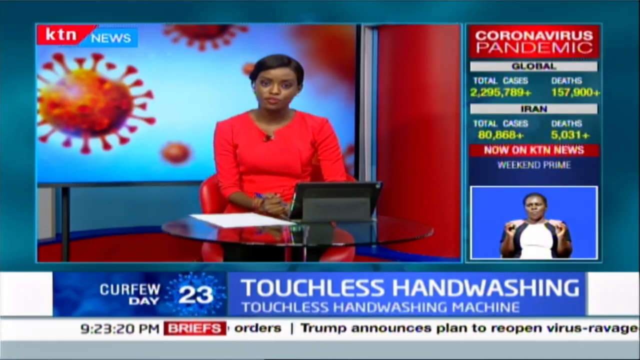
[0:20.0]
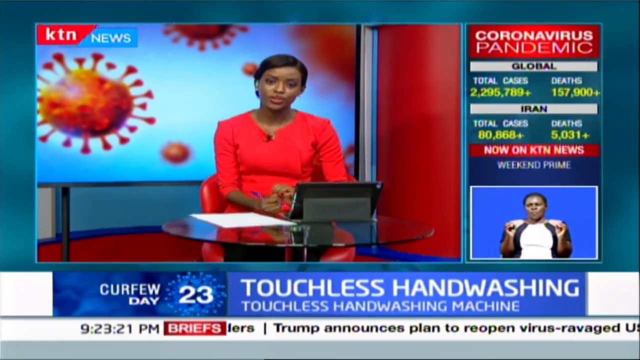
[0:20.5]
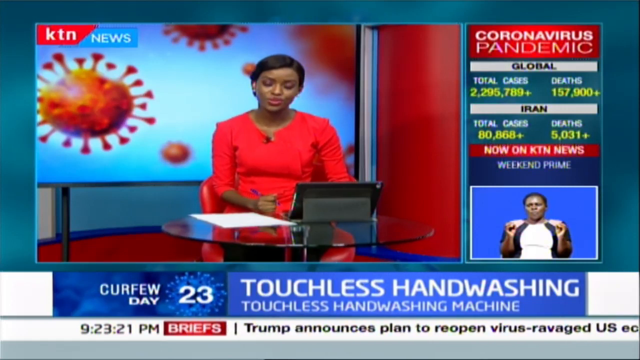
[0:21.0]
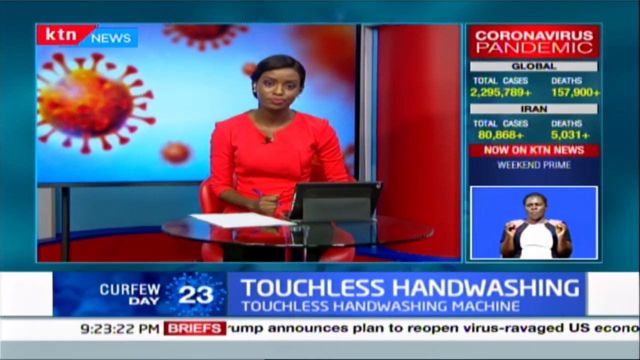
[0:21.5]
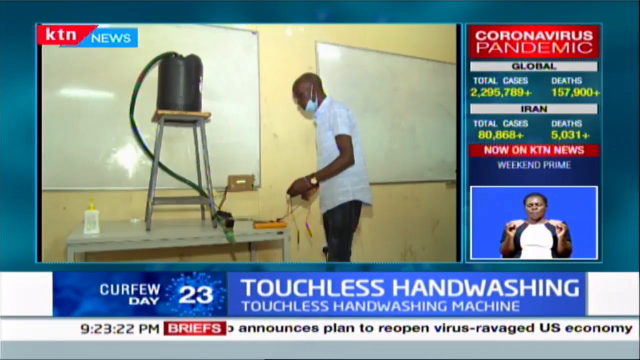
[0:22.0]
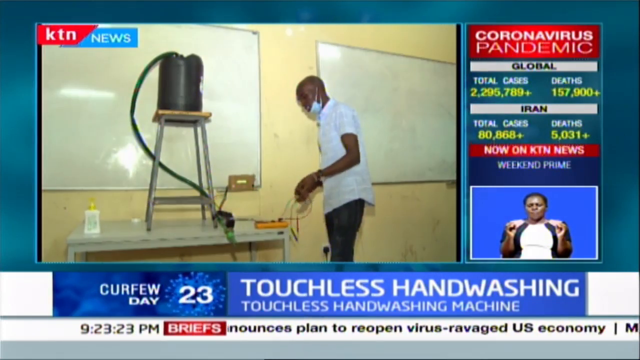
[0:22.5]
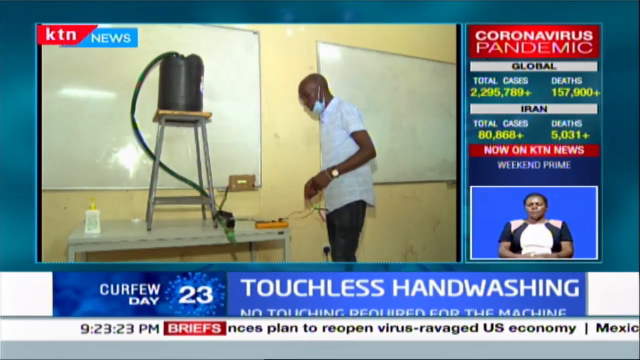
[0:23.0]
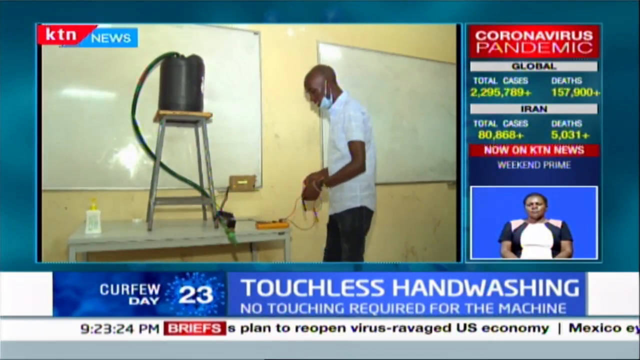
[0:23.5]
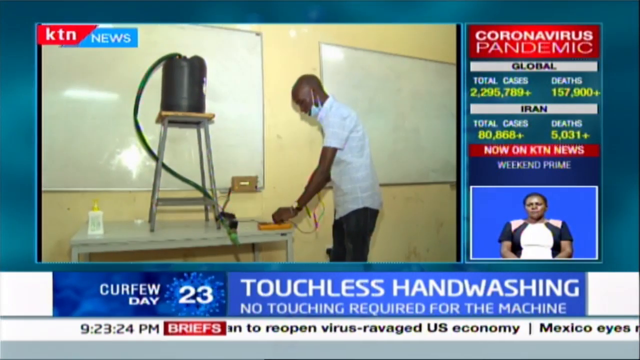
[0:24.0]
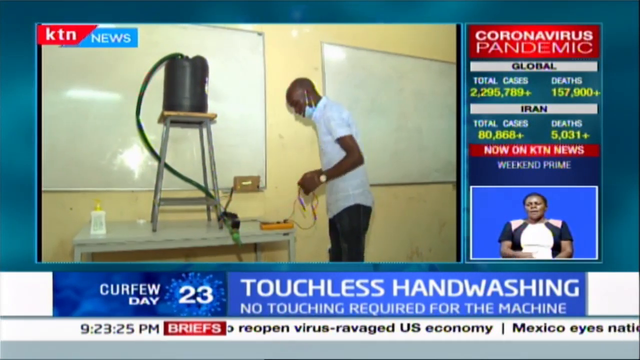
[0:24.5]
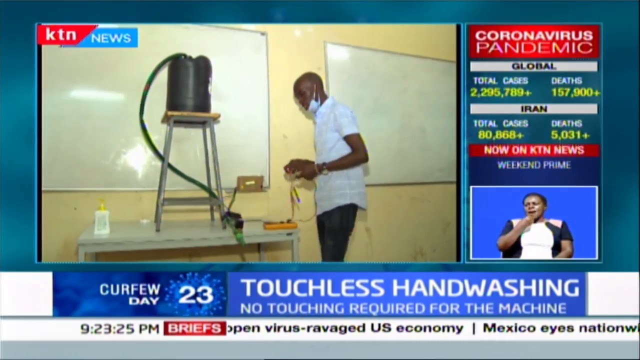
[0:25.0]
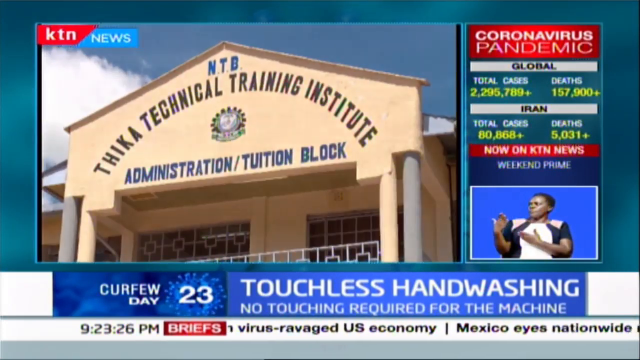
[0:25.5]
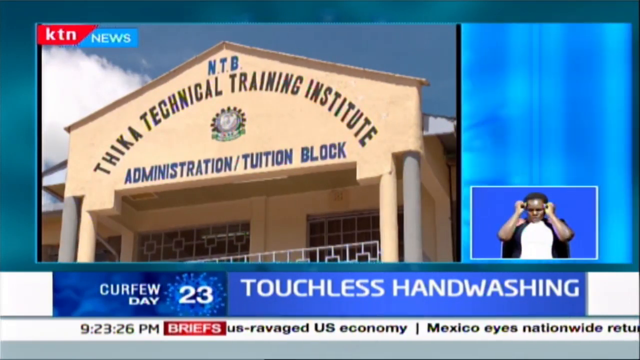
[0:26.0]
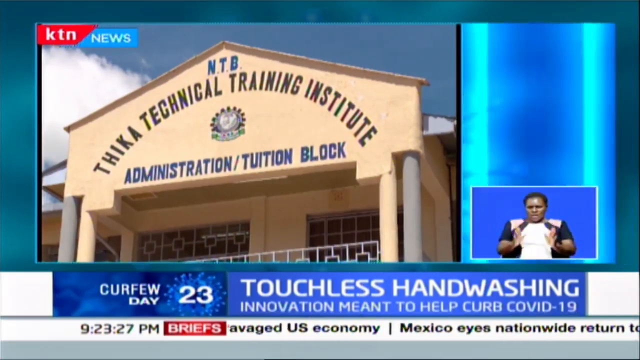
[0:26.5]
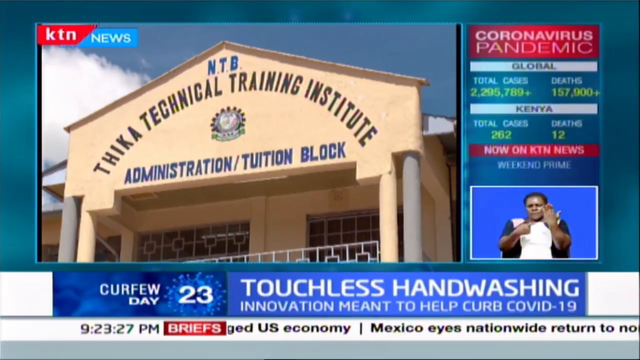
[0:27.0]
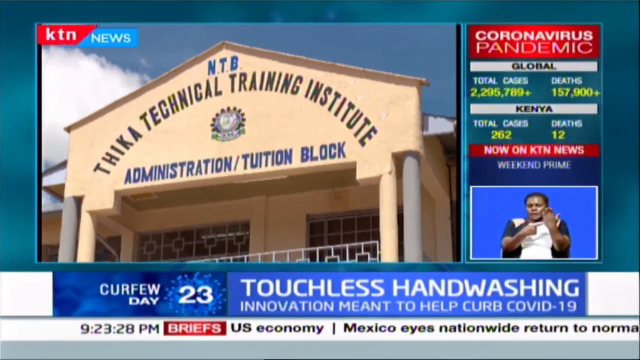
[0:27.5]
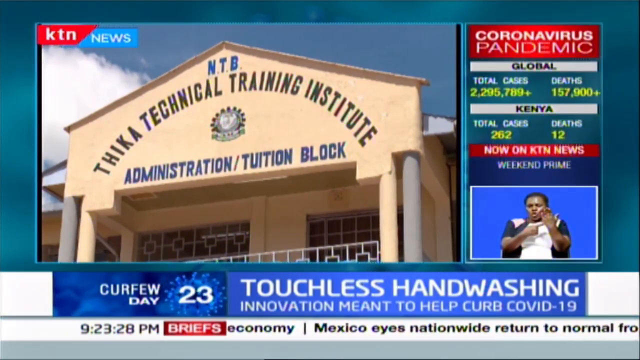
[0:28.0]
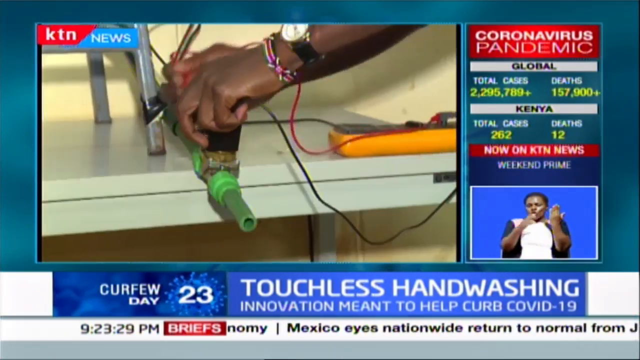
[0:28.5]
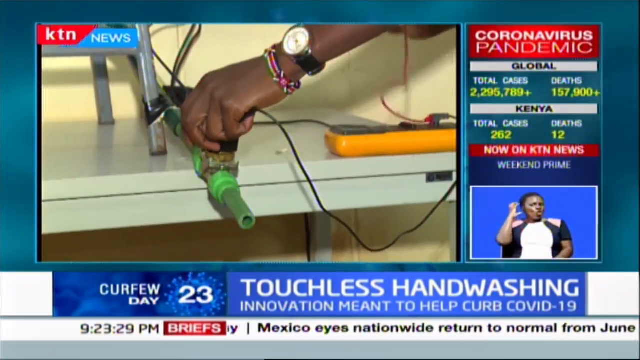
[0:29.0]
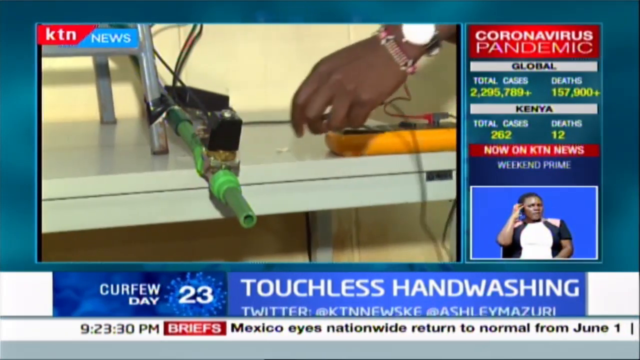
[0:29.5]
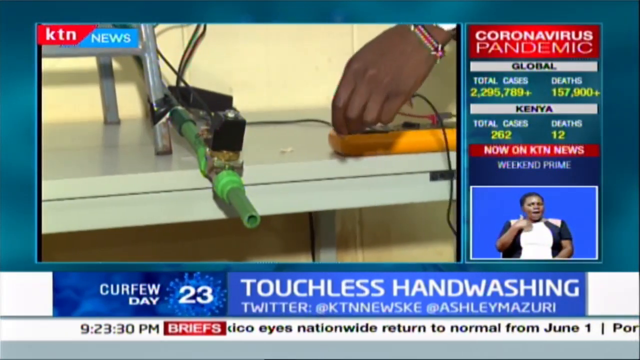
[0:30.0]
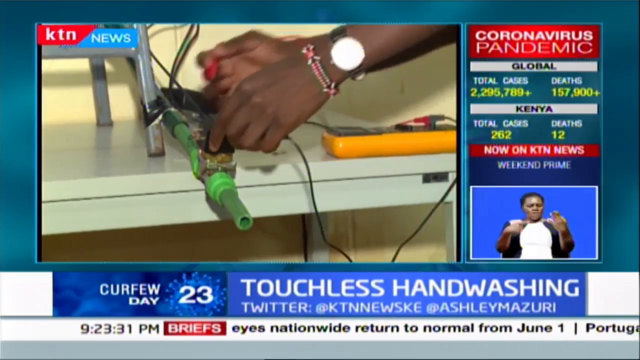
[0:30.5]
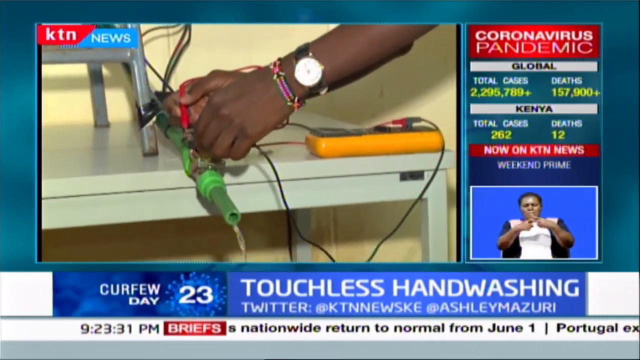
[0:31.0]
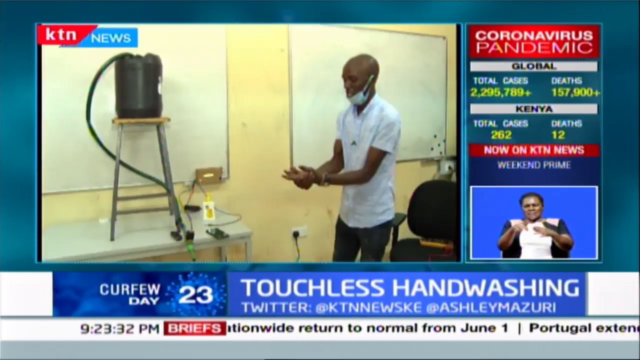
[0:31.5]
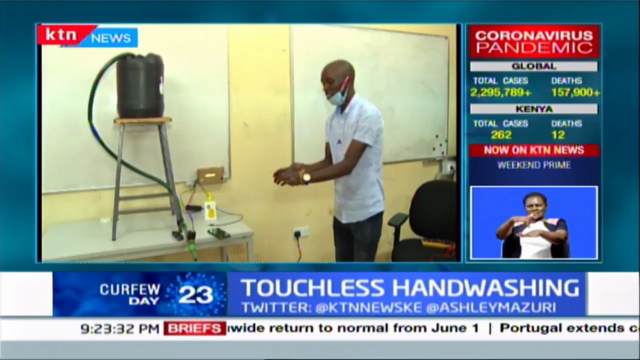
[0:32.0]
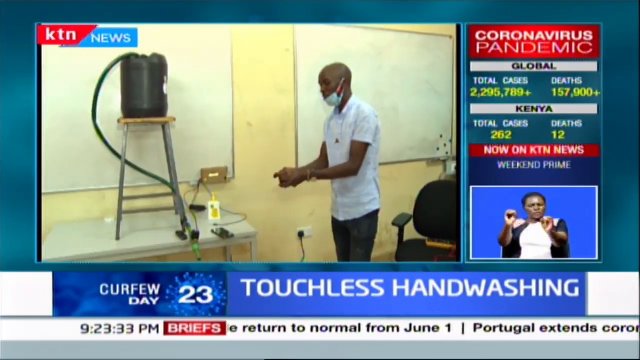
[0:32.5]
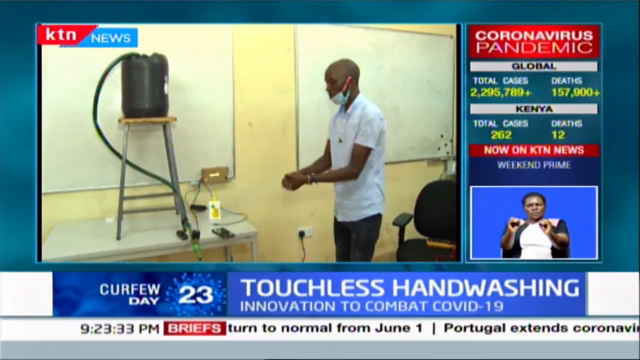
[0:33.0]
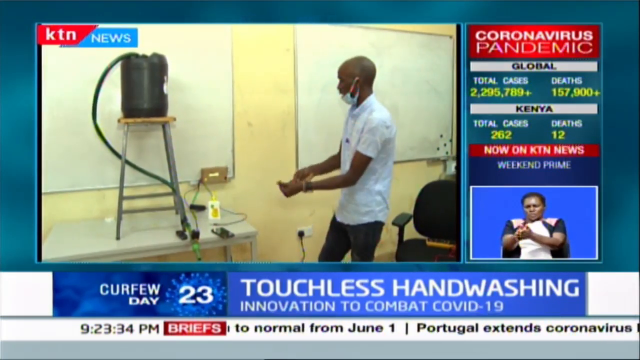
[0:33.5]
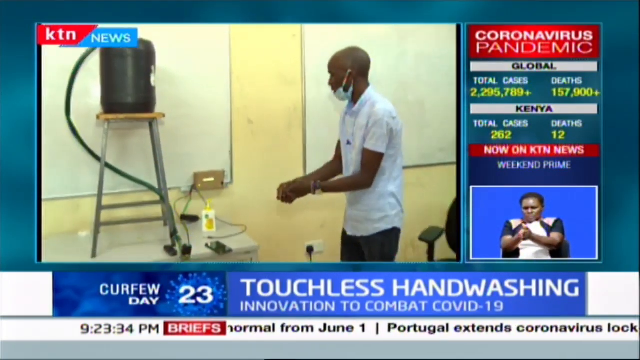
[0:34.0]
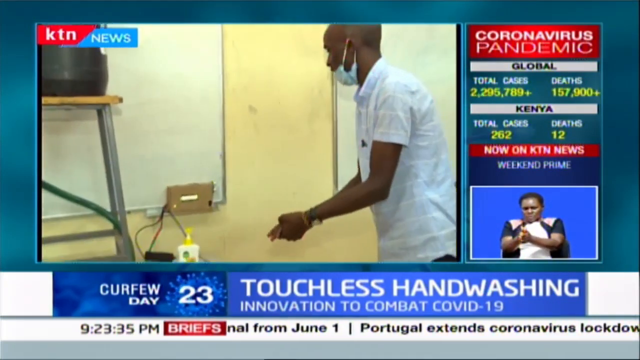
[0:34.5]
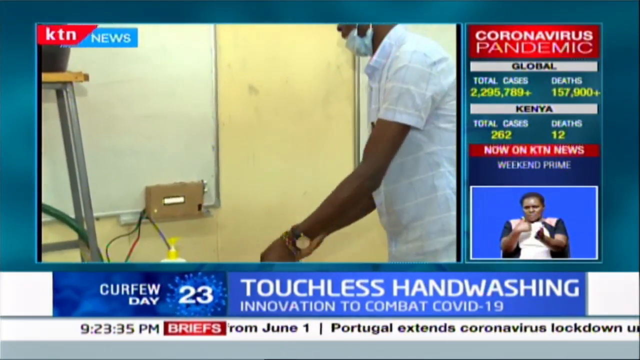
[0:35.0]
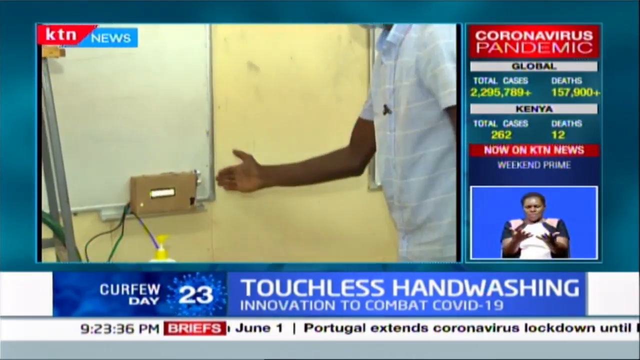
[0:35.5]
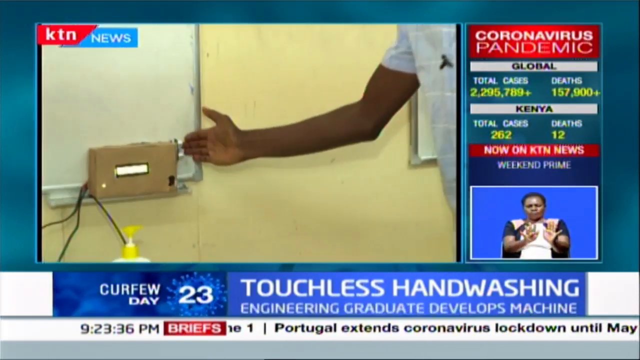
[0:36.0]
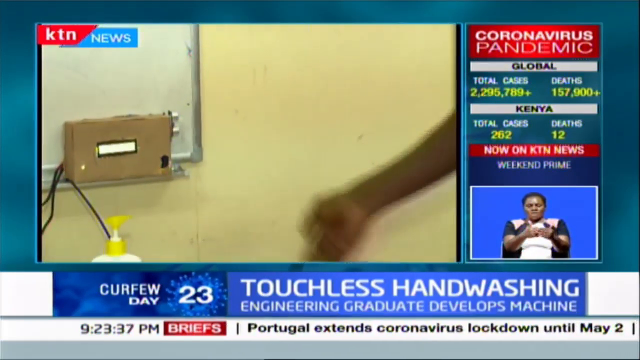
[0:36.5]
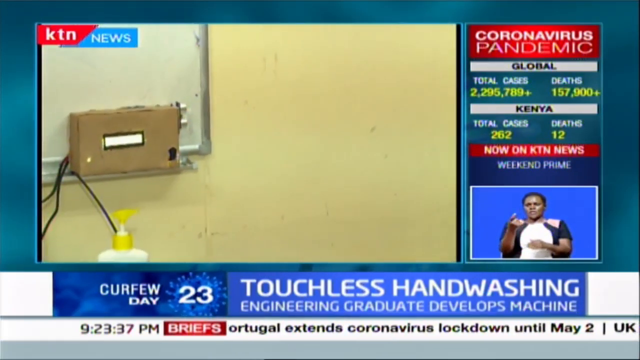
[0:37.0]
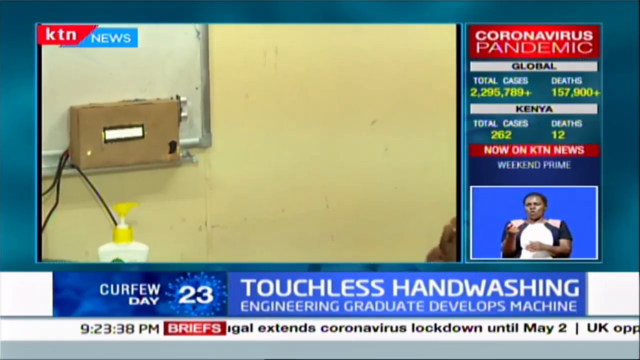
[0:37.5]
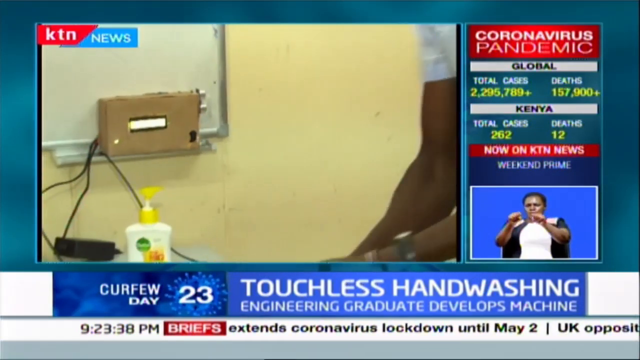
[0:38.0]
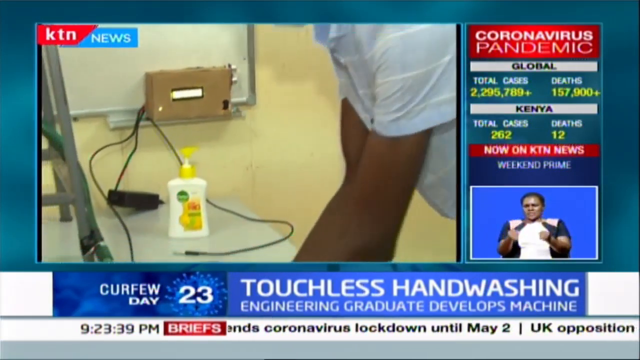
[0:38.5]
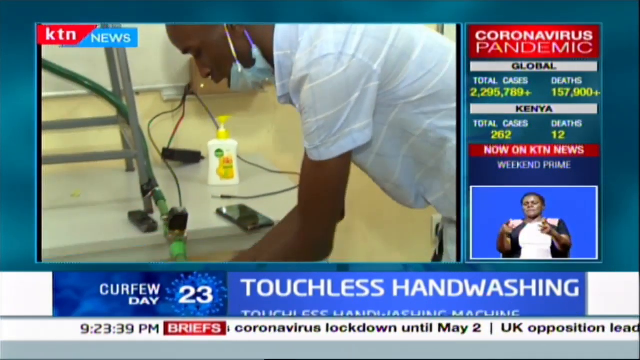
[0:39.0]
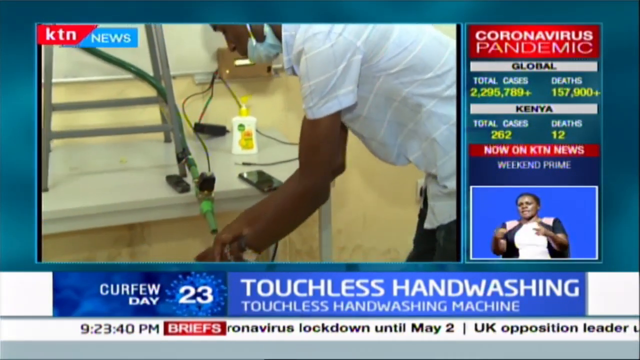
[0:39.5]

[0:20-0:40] The KTN News broadcast, apparently from somewhere on the African continent, shows an image of a building with text reading "THIKA, Technical Training Institute, Administration Tuition Block," and at the very top of the building in the center, "N-T-B." In the lower right part of the screen, a translator is doing sign language. The broadcast then shows some medical equipment and testing equipment, possibly a water purifying system or a cleaning station for medical people; a man uses some type of soap and some water to wash his hands.